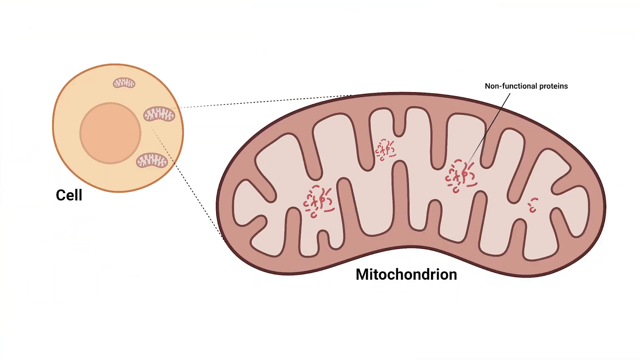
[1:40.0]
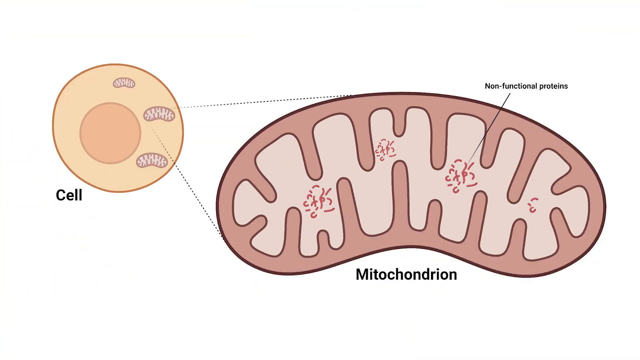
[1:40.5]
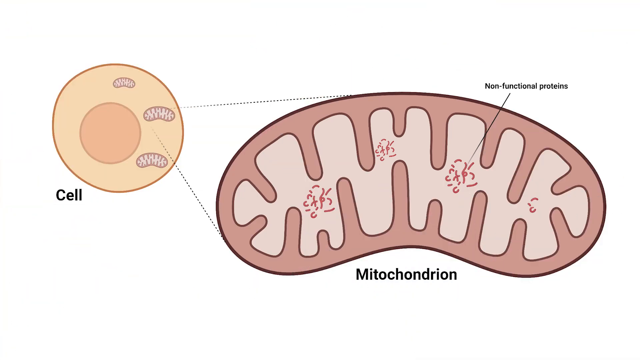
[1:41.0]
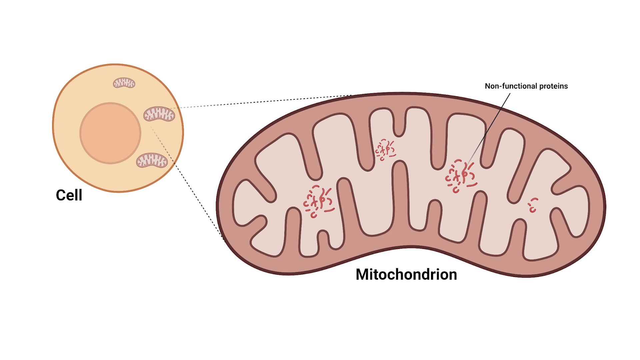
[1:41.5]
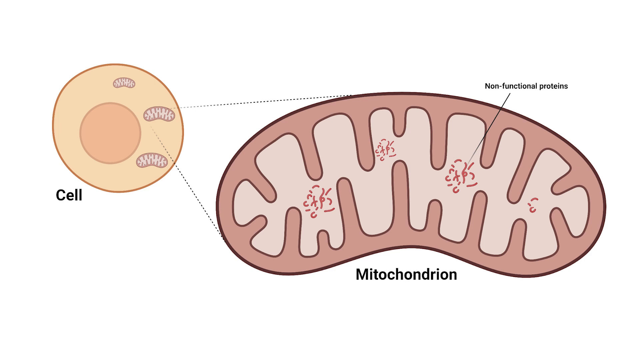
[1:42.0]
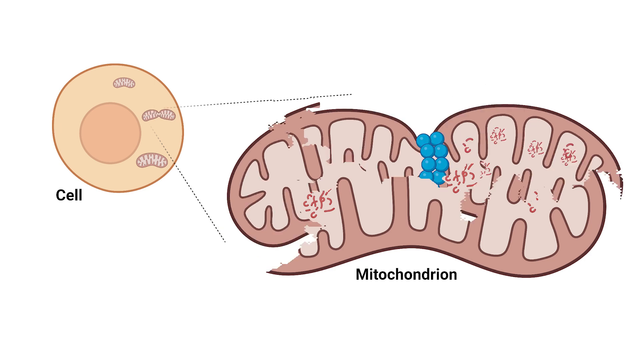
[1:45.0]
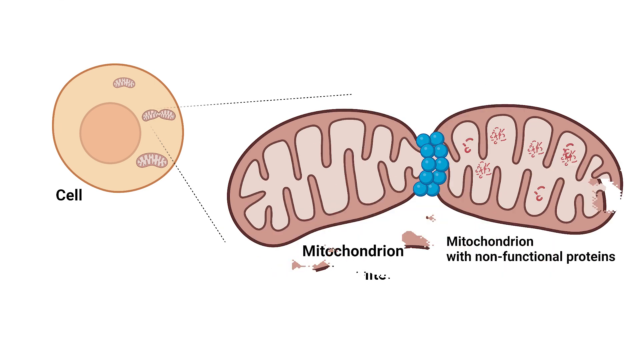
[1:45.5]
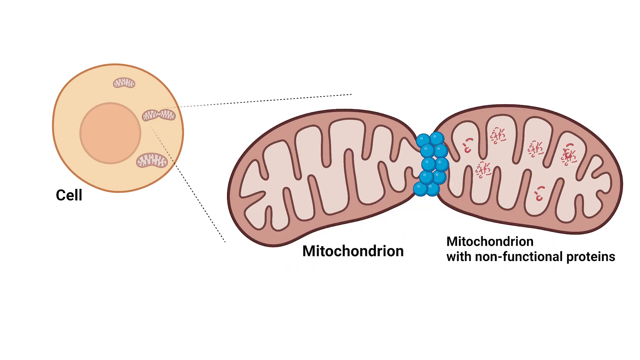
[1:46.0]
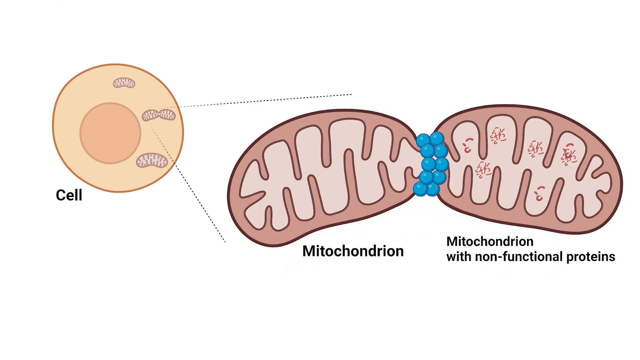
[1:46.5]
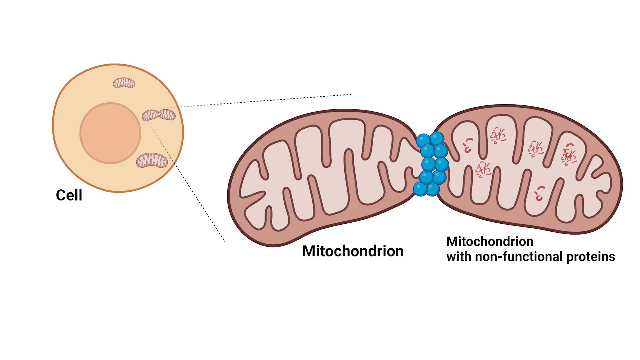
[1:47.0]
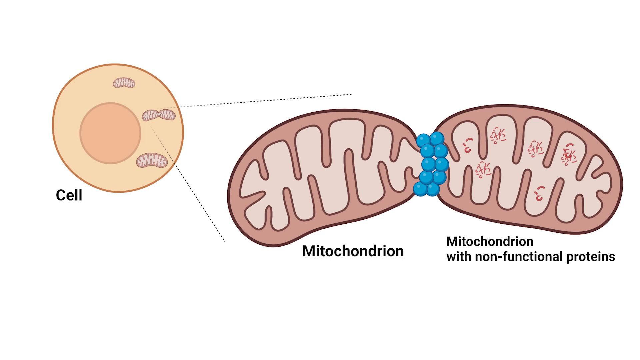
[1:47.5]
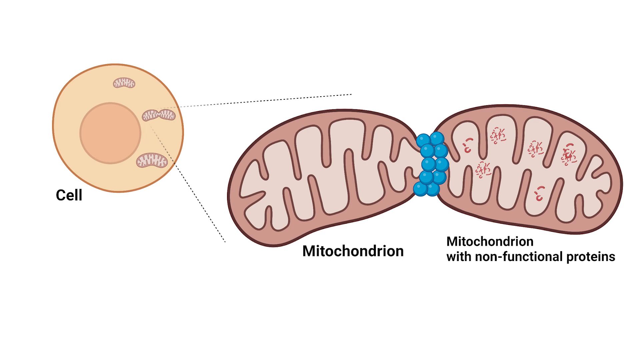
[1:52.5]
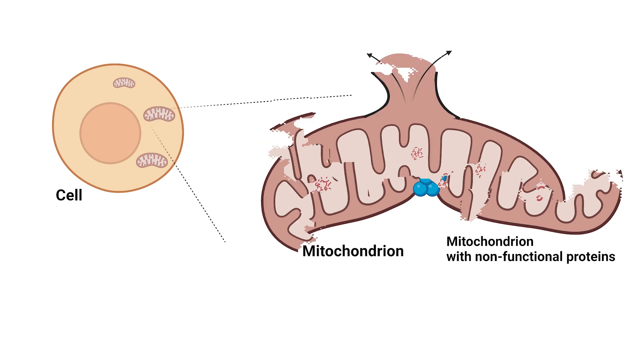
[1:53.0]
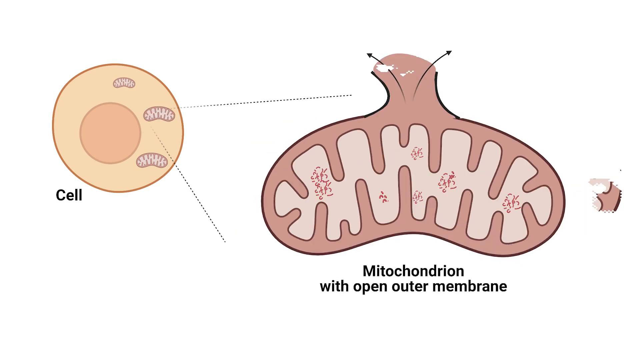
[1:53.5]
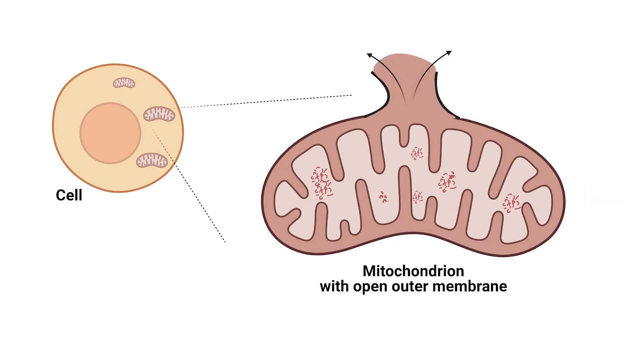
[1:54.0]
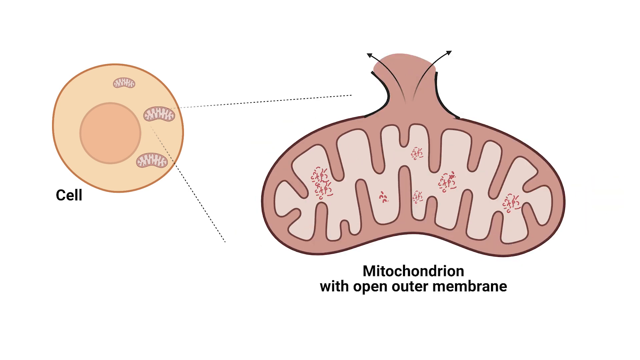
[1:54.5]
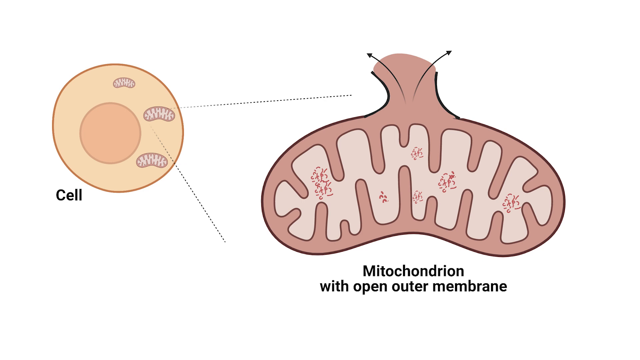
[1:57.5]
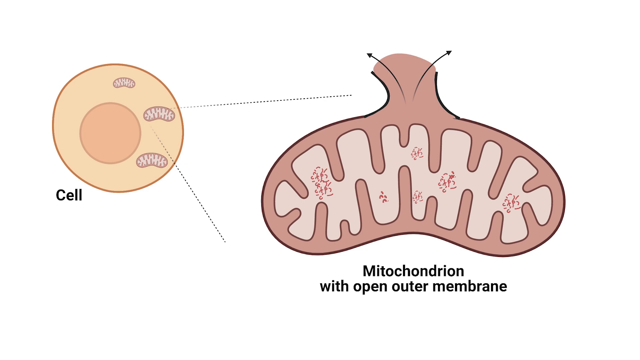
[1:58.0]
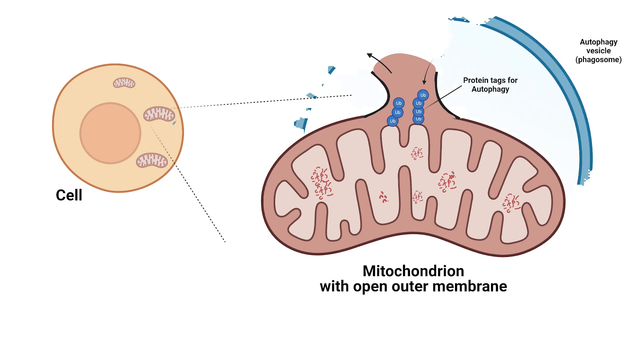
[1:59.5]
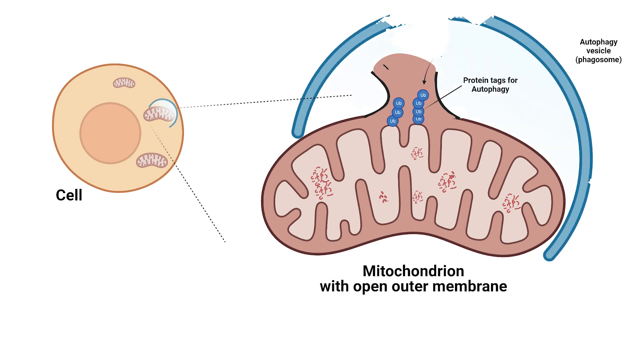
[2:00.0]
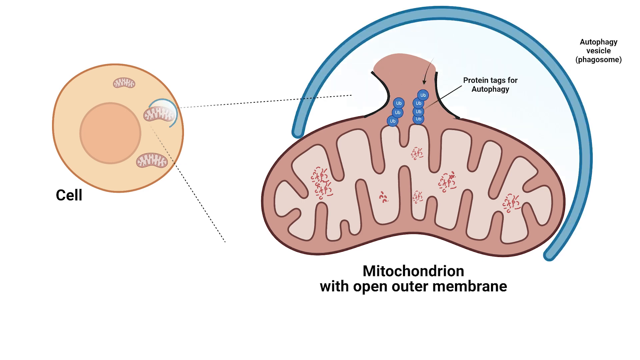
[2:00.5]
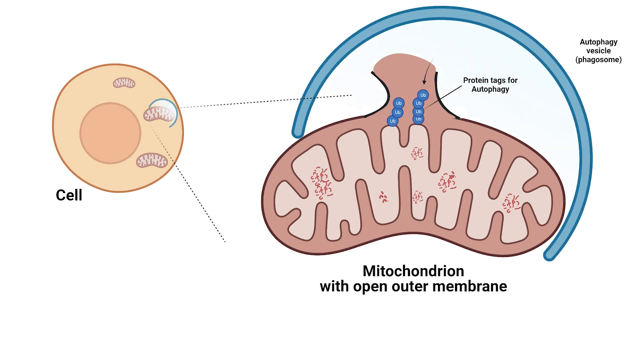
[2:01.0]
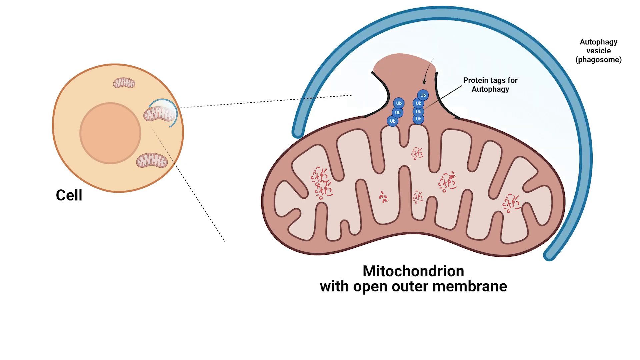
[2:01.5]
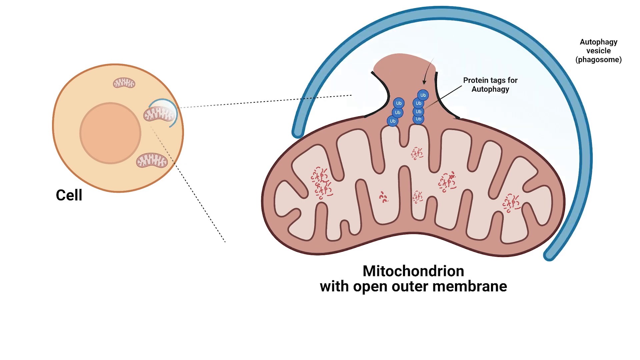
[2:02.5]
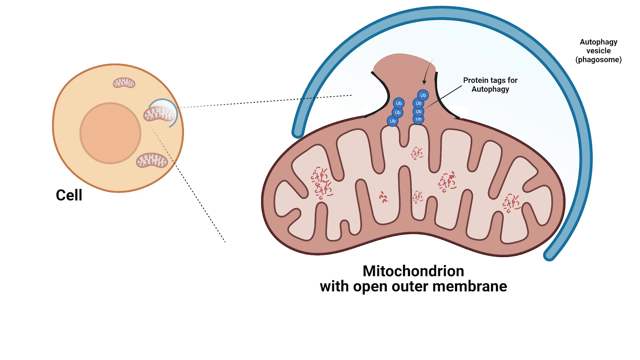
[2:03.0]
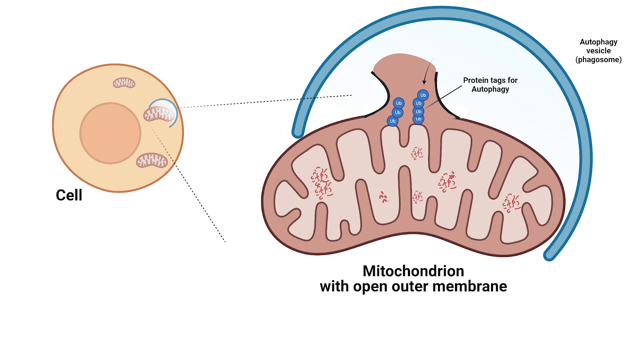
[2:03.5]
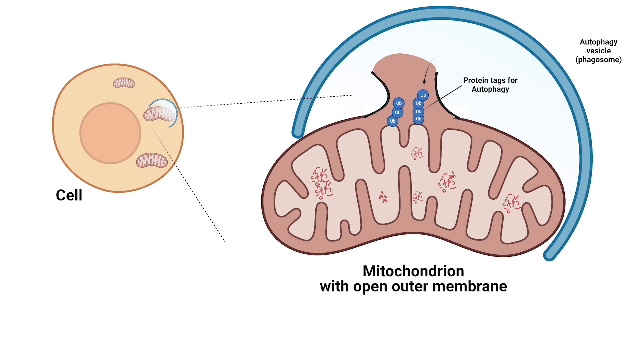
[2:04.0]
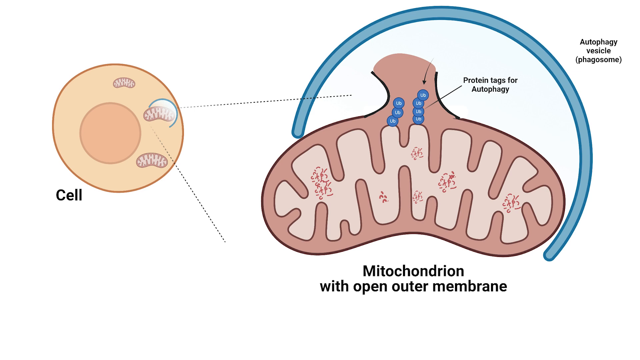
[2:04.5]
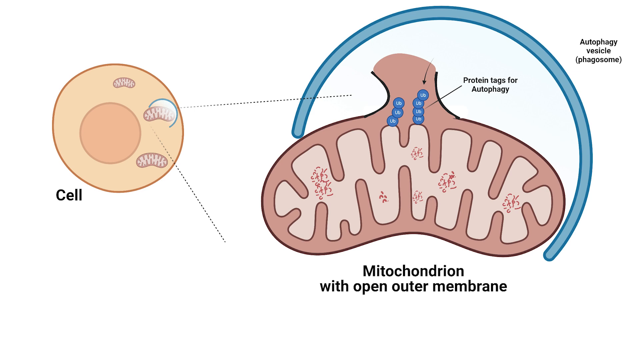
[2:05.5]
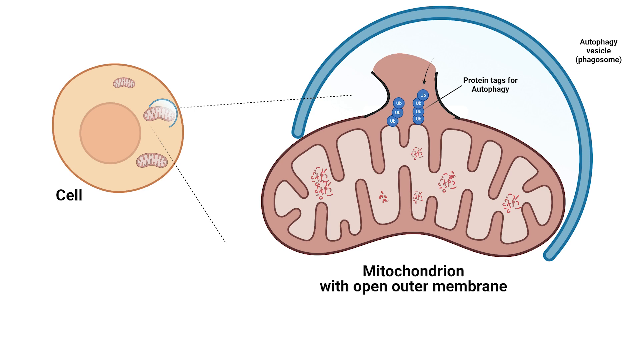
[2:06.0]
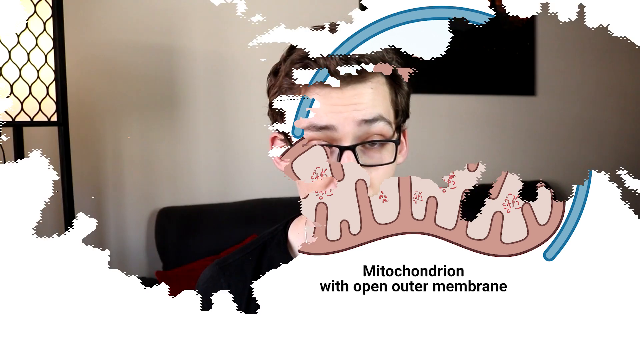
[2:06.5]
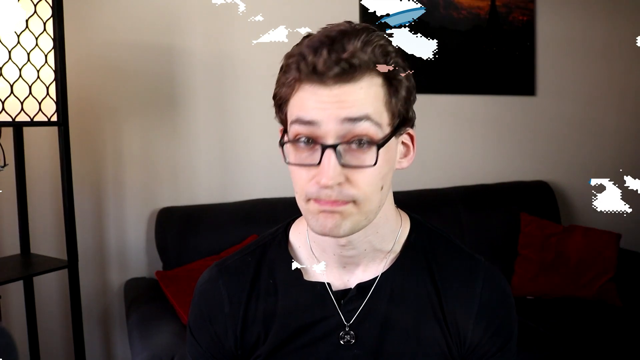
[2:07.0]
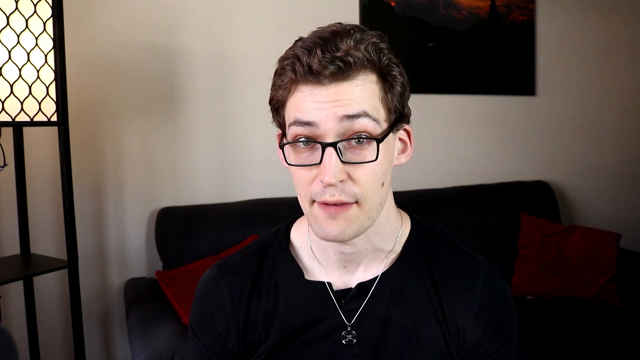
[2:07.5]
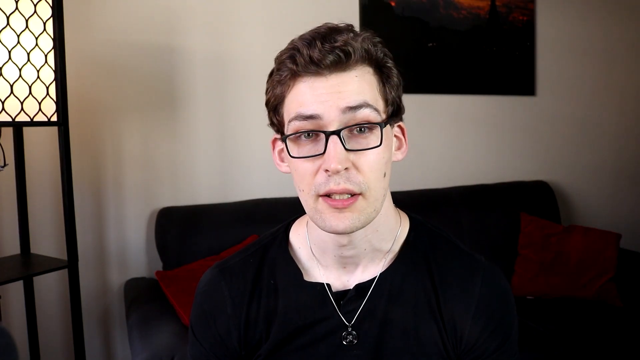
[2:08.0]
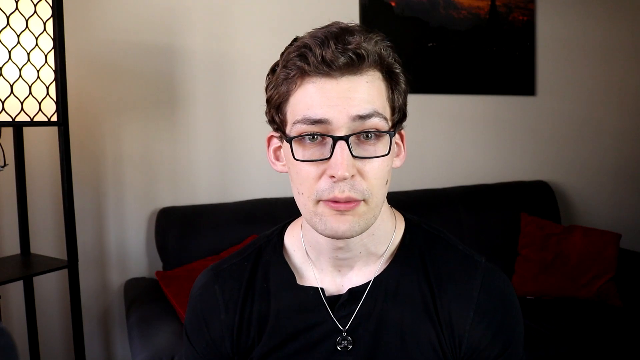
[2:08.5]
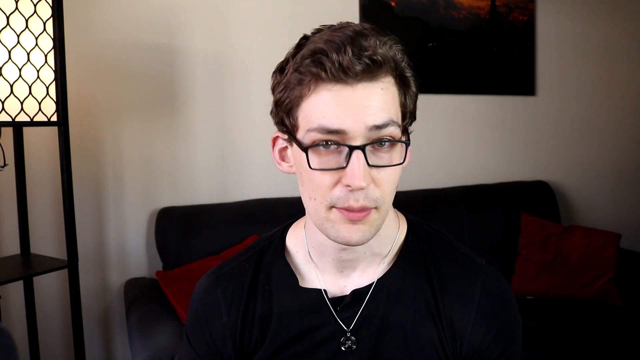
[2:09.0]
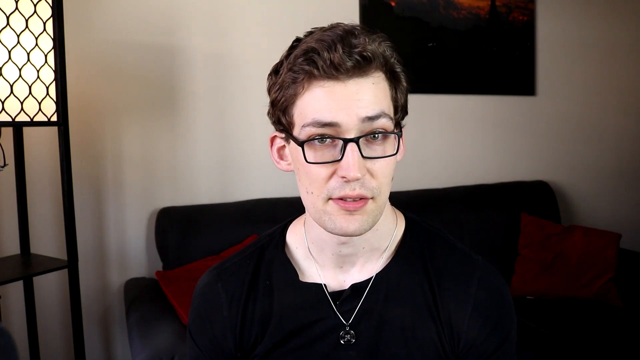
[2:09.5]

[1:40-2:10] An image shows the cell with its outer cell wall and several mitochondria inside, followed by a zoomed-in view of a mitochondrion showing non-functional proteins. Another image shows a mitochondrion that looks divided into two segments: one half appears to have normal functionality, while the right half has non-functioning proteins, with the segments separated by blue dots. The video then shows the mitochondrion's open outer membrane.